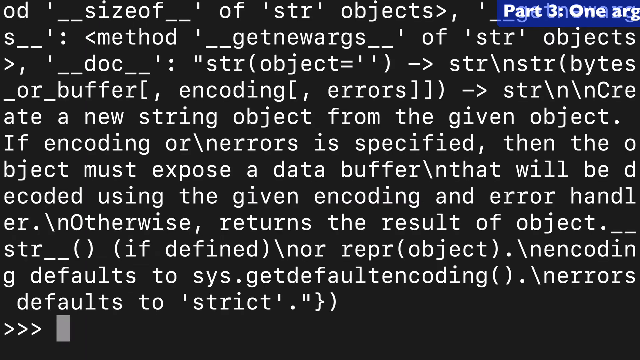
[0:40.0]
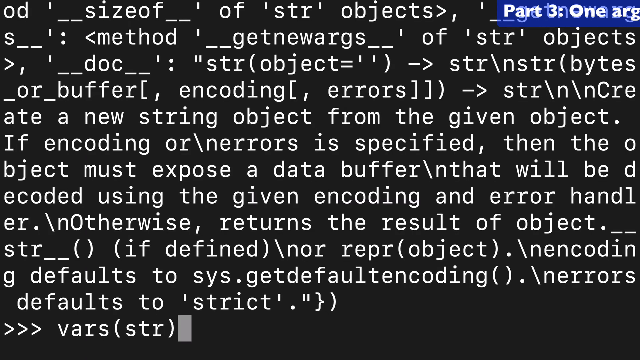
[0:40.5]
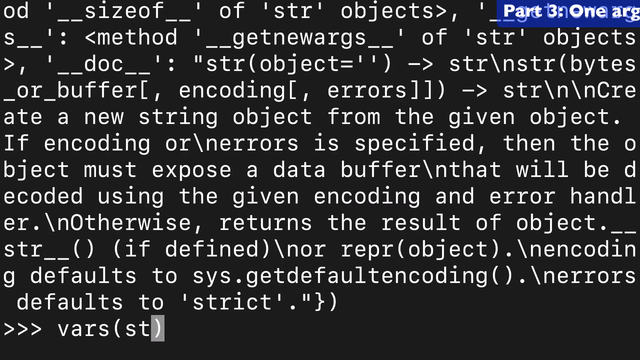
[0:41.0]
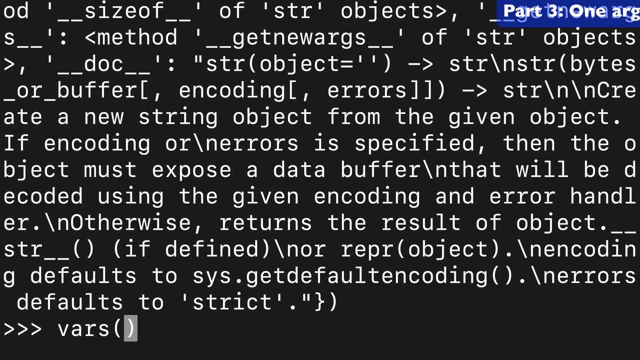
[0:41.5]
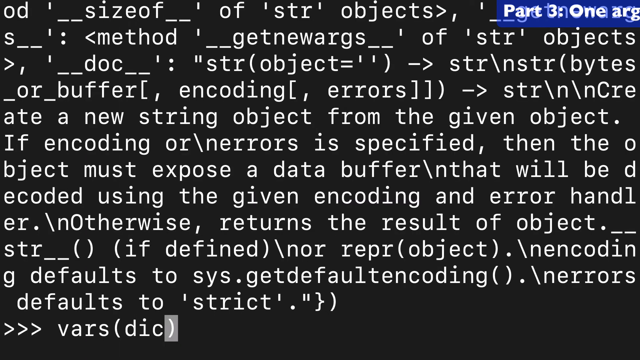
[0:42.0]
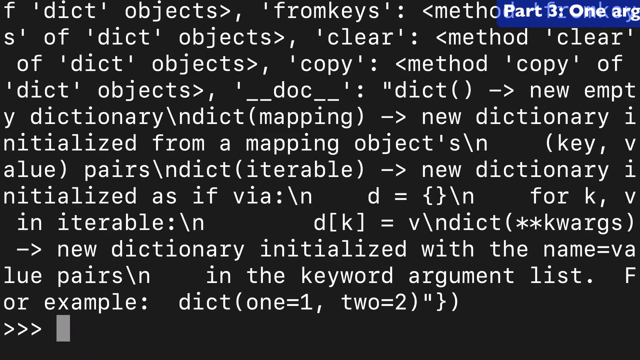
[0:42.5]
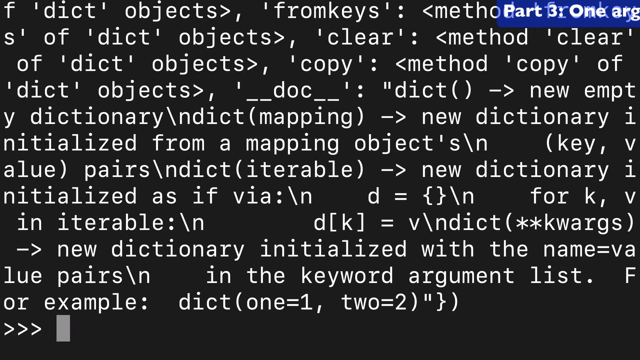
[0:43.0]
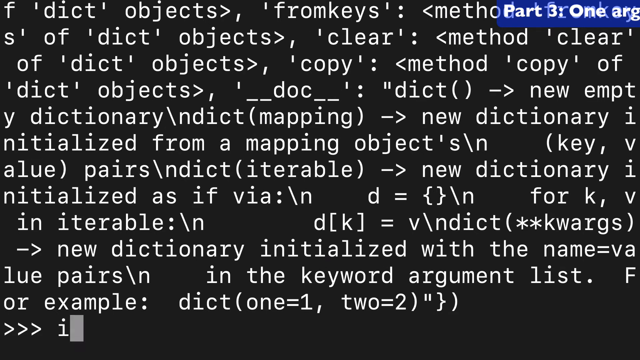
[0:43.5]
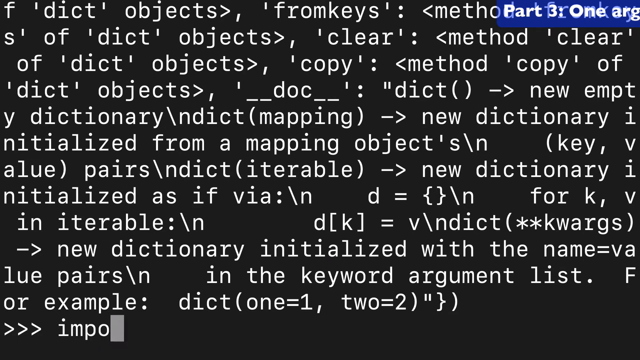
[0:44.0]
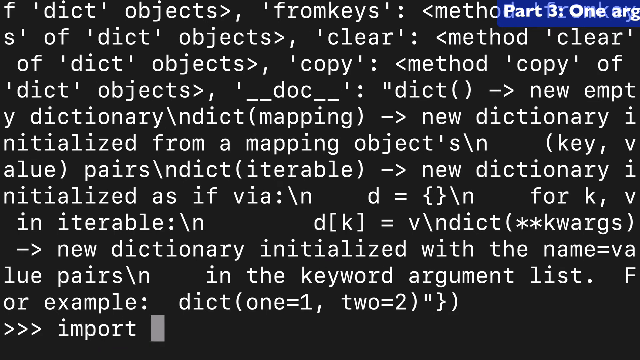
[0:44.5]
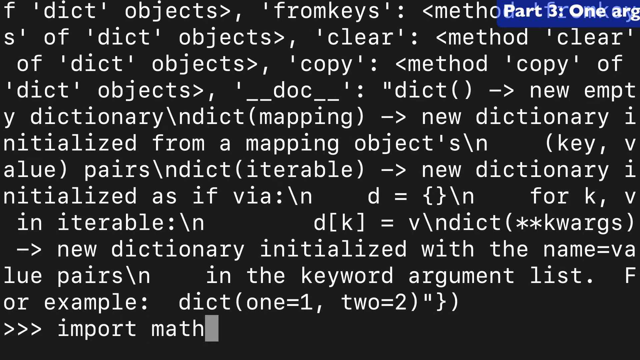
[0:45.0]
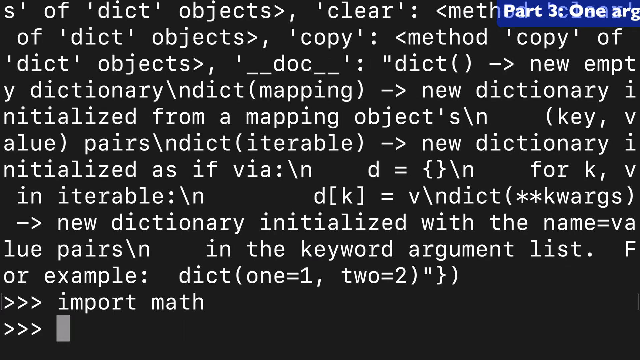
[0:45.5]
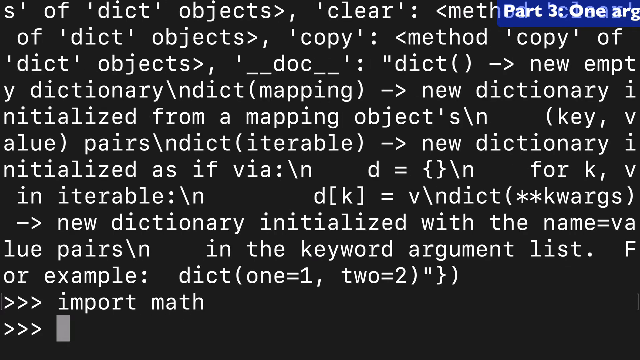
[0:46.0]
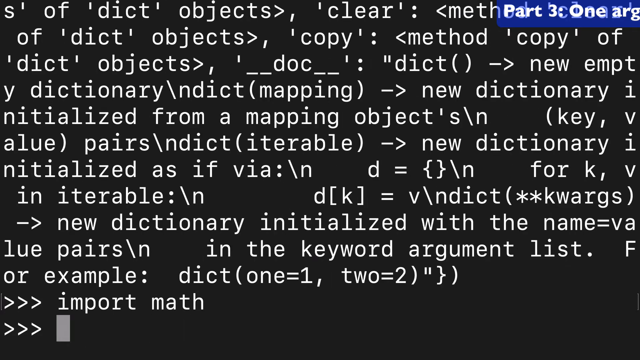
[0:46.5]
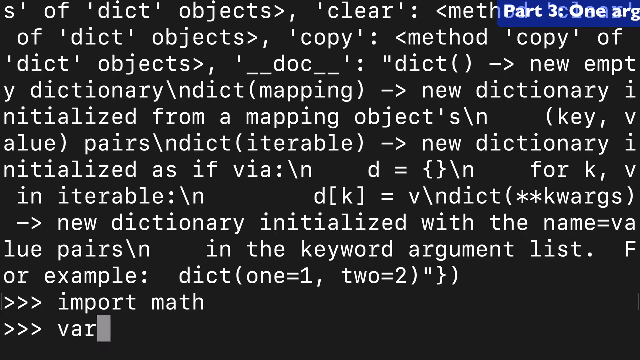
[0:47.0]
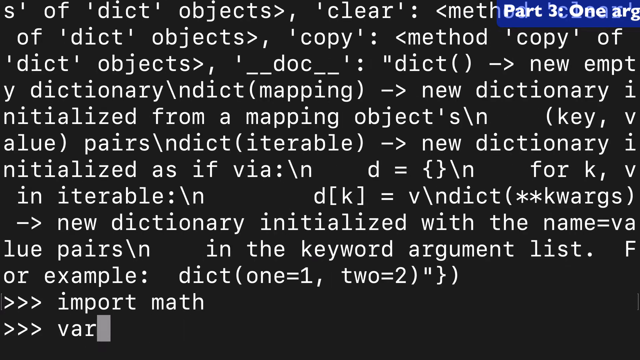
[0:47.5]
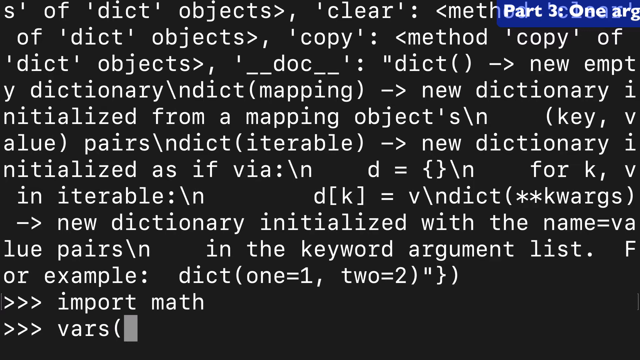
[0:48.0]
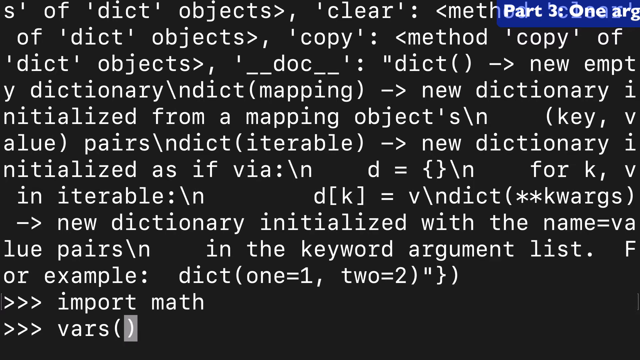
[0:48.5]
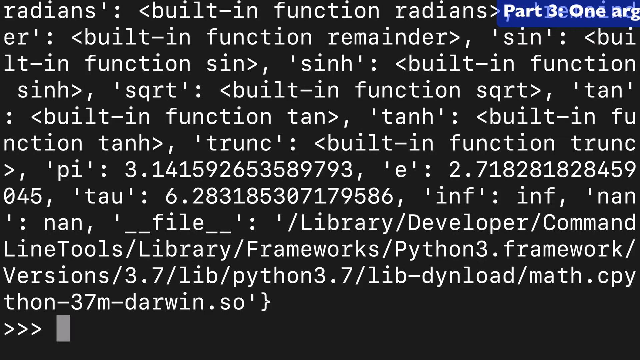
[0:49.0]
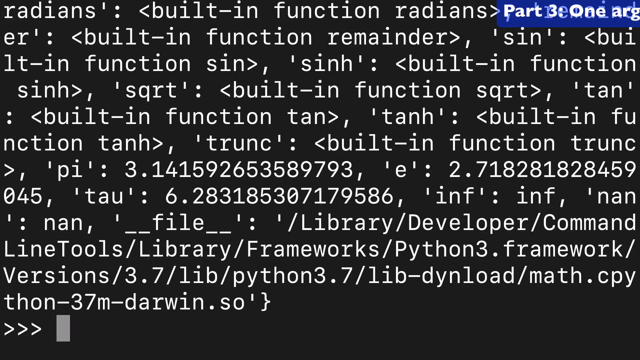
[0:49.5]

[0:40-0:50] The typed text continues. In white font on a blue rectangle, a label says "part 3". Among the typed text is "a new string object from the given object", with several "\n" sequences, "str" with underscores and parentheses, and "object" in parentheses. At the bottom, the person is still typing, entering "import math".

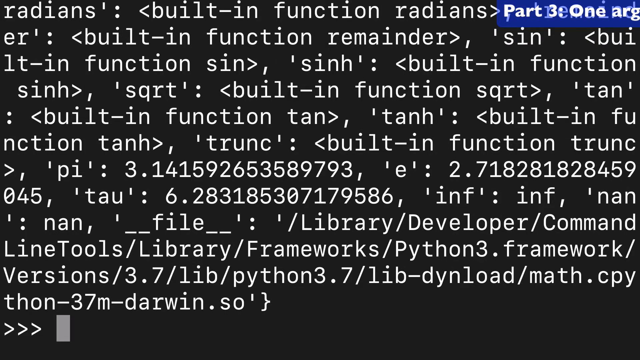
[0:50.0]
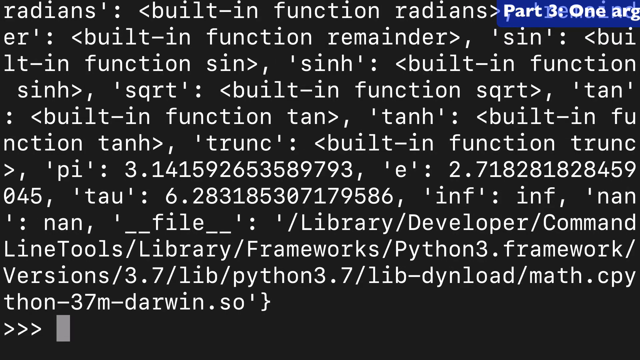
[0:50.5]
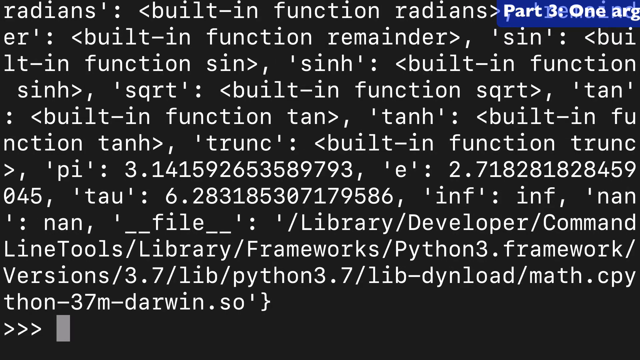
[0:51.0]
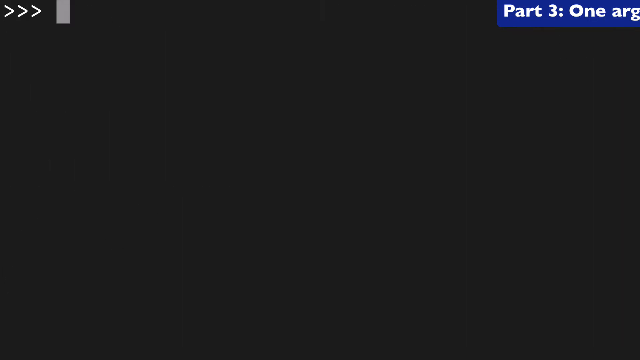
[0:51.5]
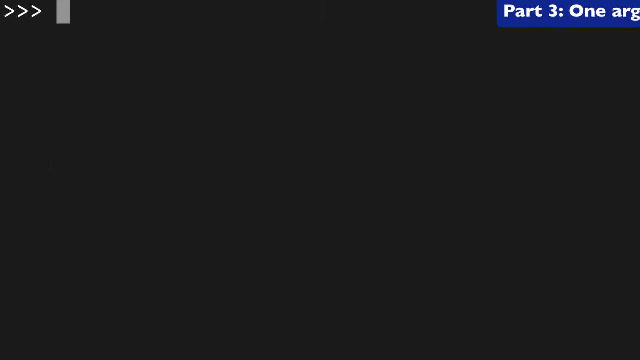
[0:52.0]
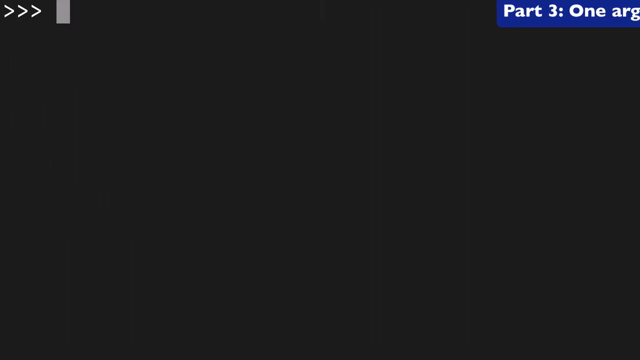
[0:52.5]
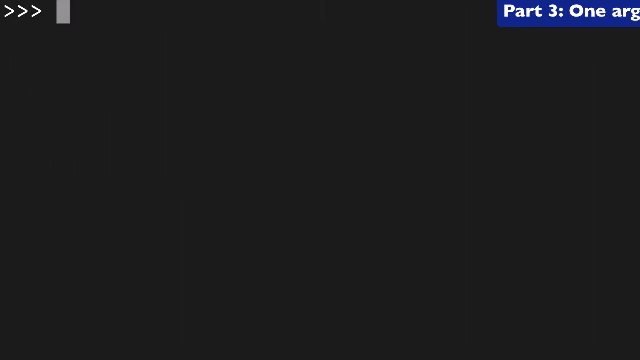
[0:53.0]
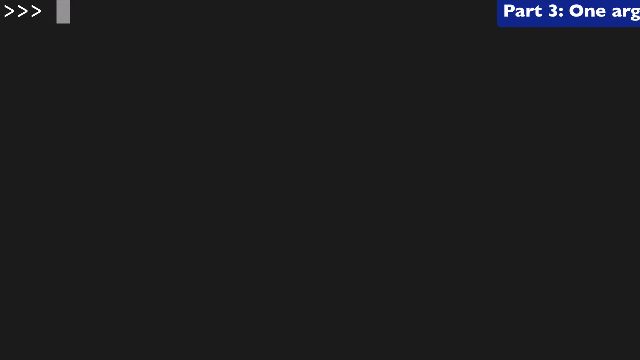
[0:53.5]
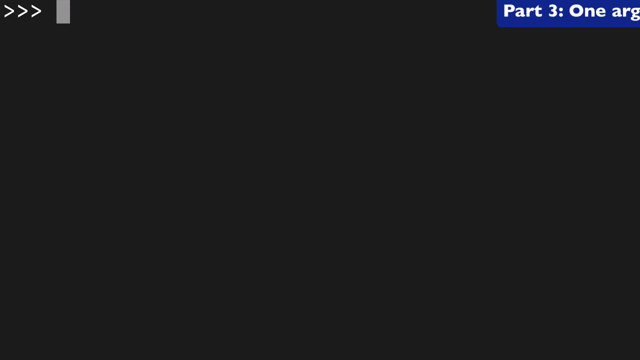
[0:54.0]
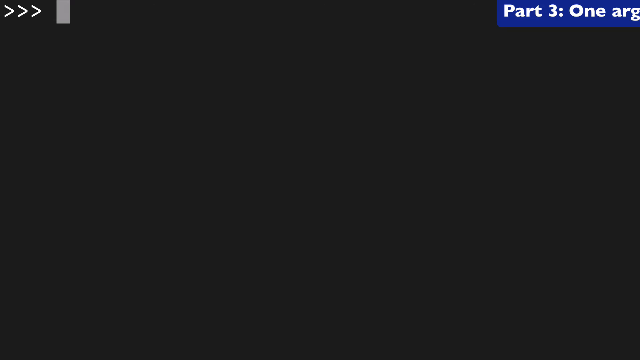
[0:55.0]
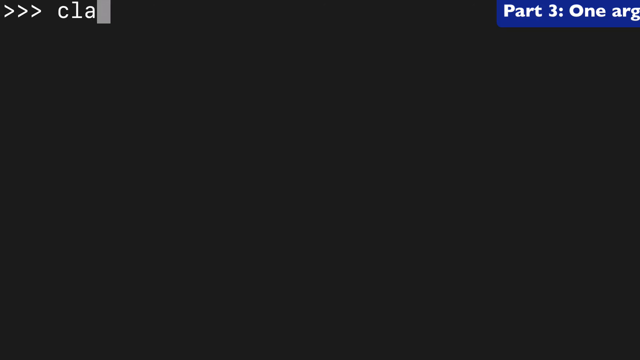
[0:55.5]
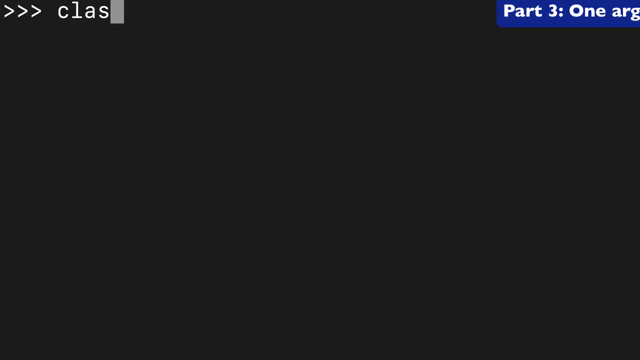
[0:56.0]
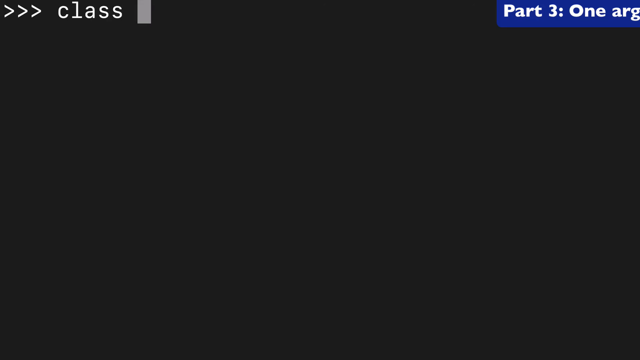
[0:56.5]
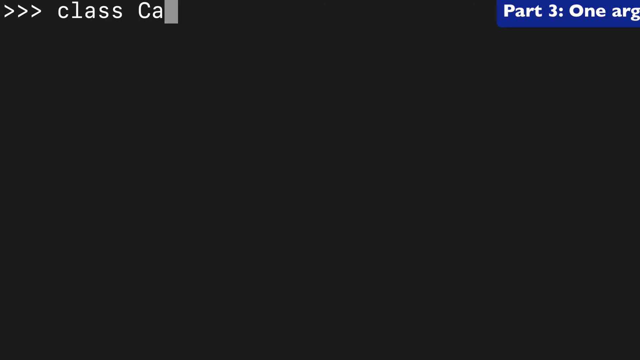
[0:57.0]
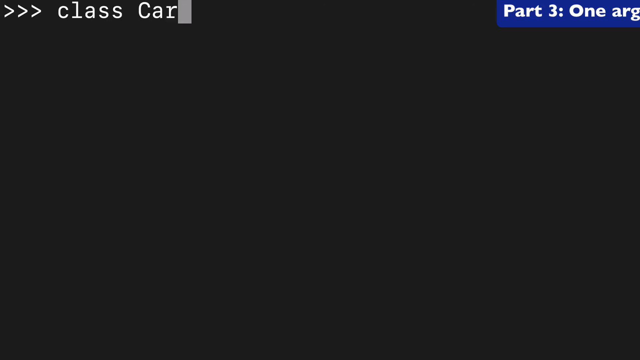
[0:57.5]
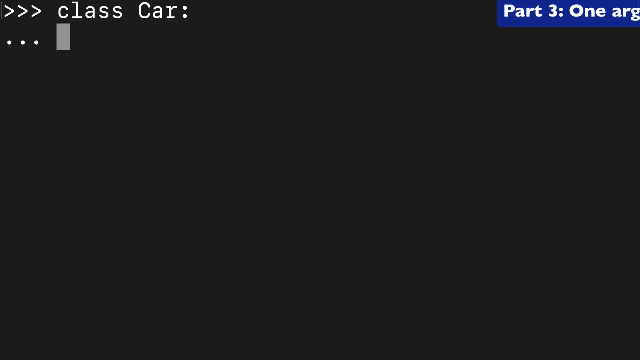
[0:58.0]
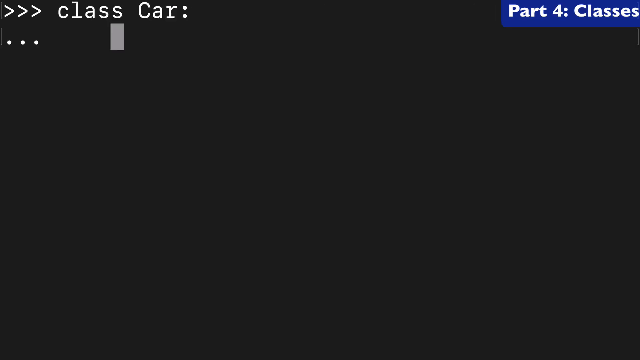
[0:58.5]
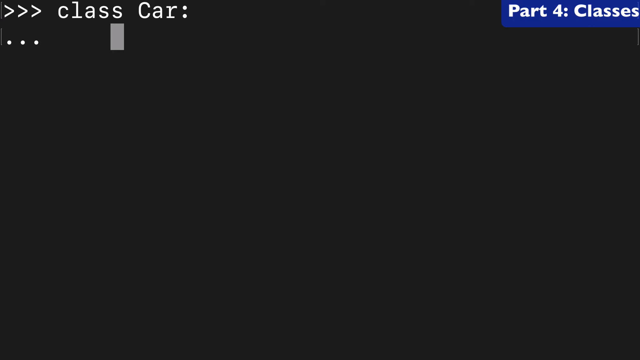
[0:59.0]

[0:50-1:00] Part of the background shows white with blue, while on the black area more typed text appears in white font. It includes "__file__" followed by dots and a file path containing "/library/developer/command line tools/library/framework/python3", "framework/version/3", "python3.7", "lib-dynload" and "math". The screen then goes blank, three greater-than symbols appear, and the person starts typing again: "class car".